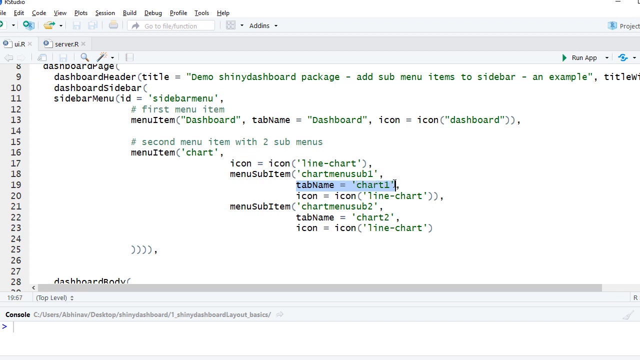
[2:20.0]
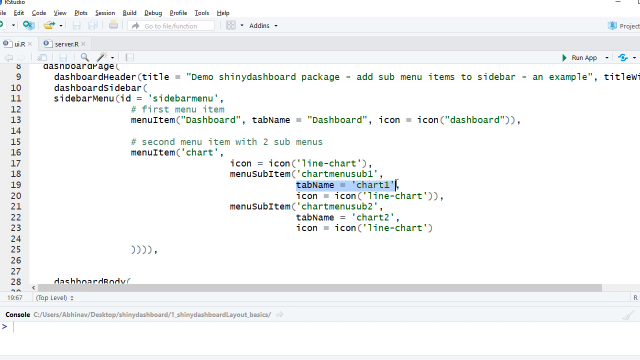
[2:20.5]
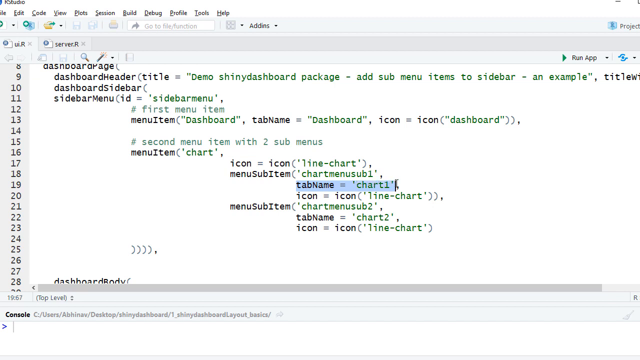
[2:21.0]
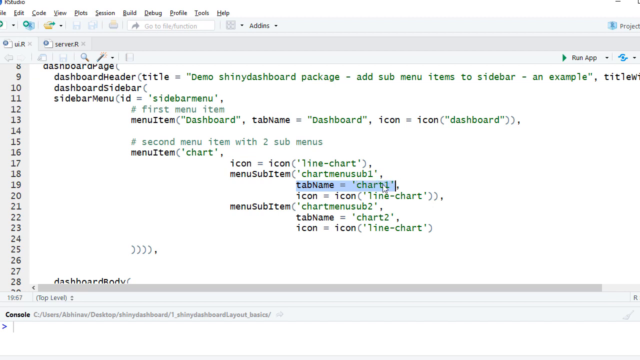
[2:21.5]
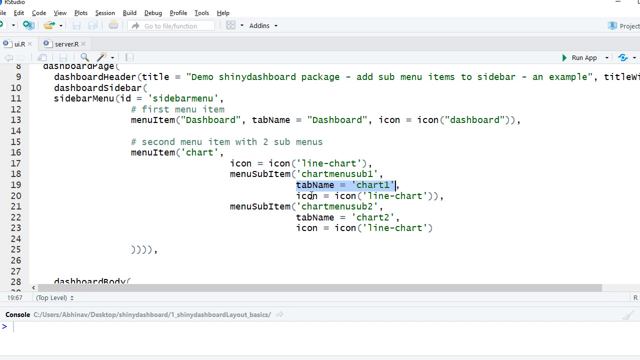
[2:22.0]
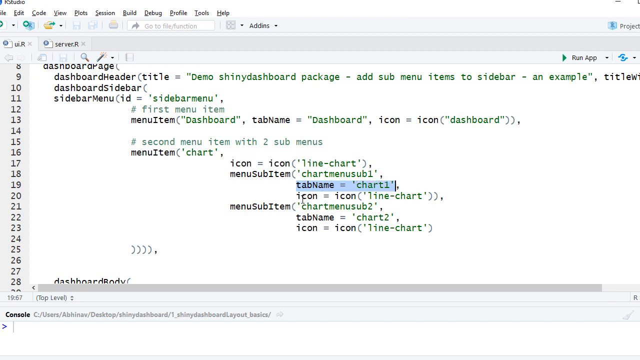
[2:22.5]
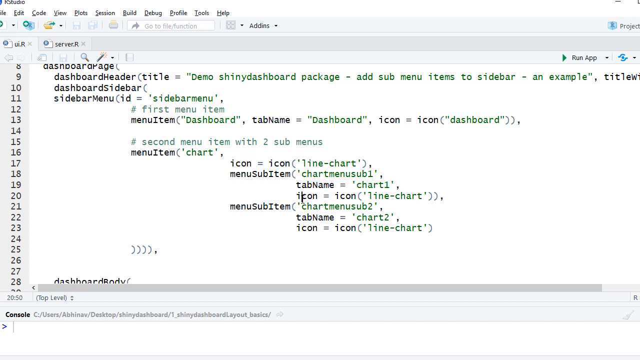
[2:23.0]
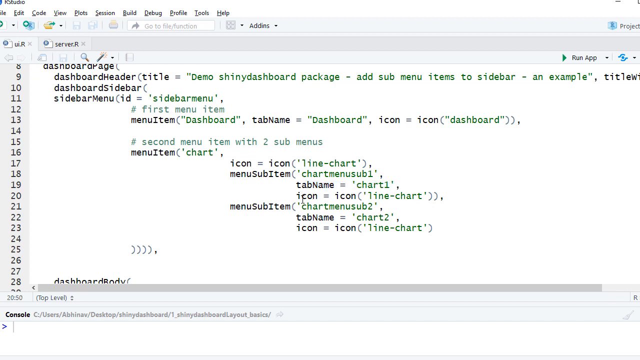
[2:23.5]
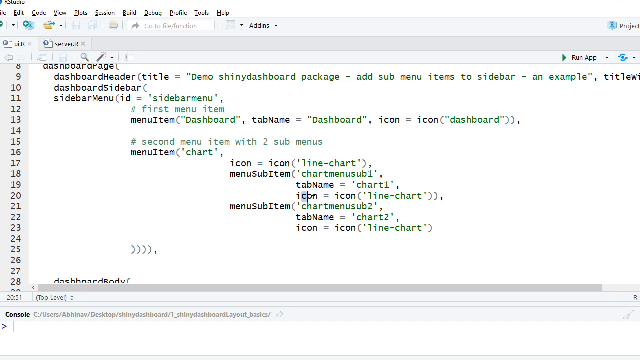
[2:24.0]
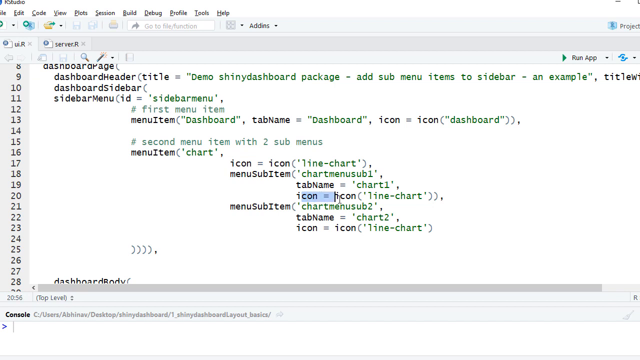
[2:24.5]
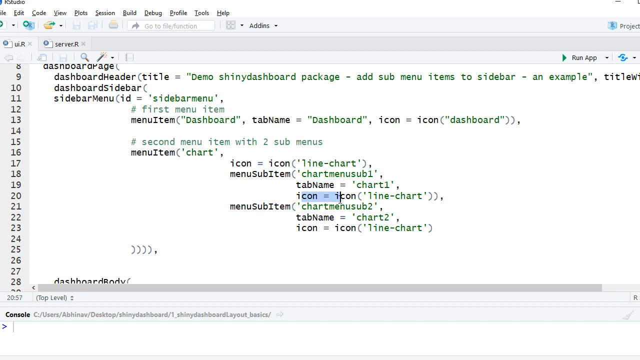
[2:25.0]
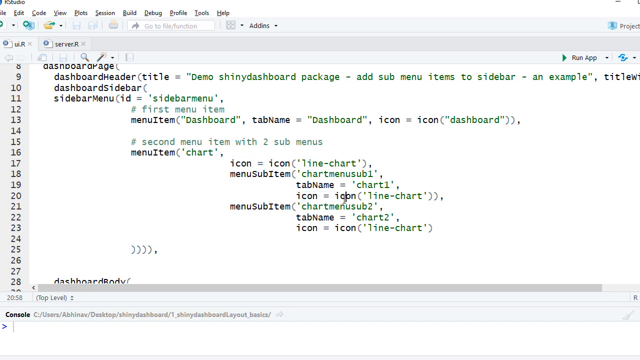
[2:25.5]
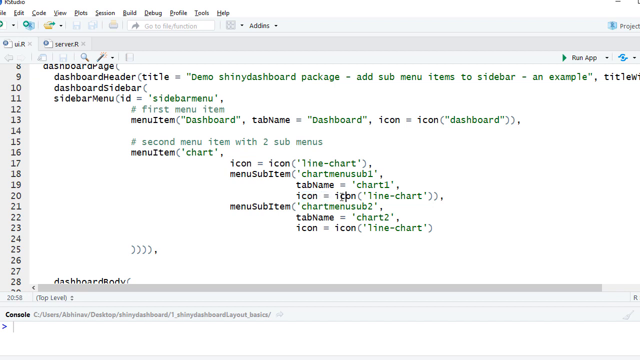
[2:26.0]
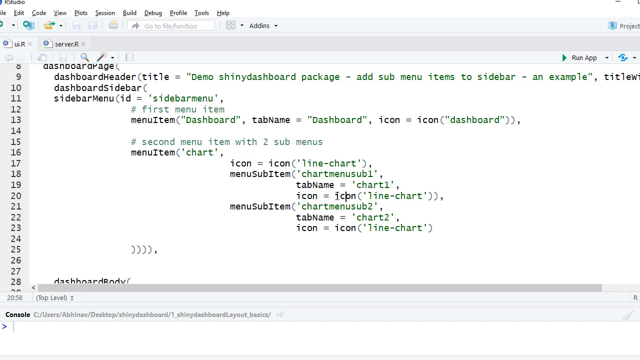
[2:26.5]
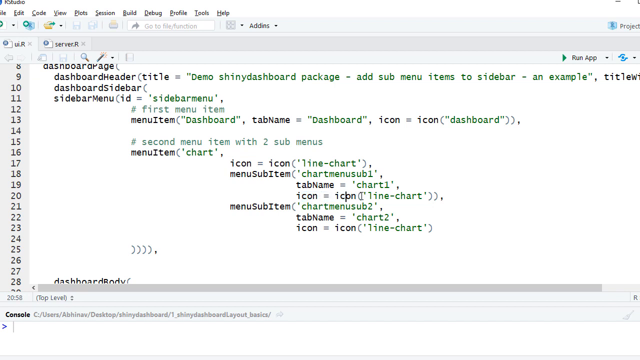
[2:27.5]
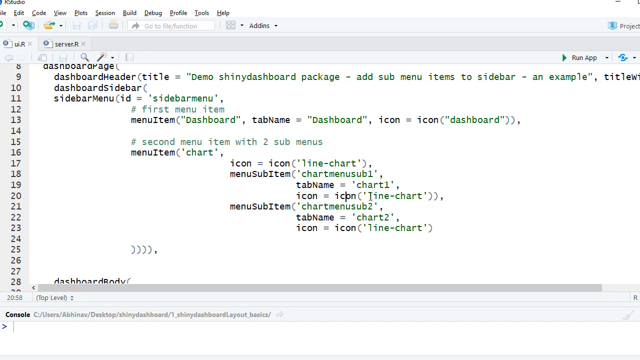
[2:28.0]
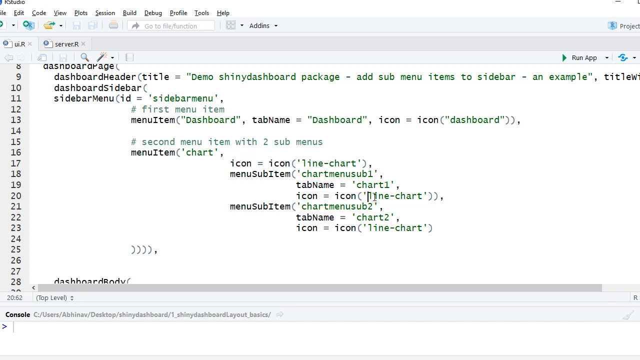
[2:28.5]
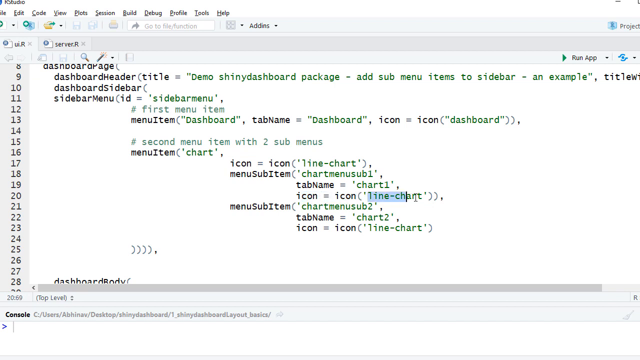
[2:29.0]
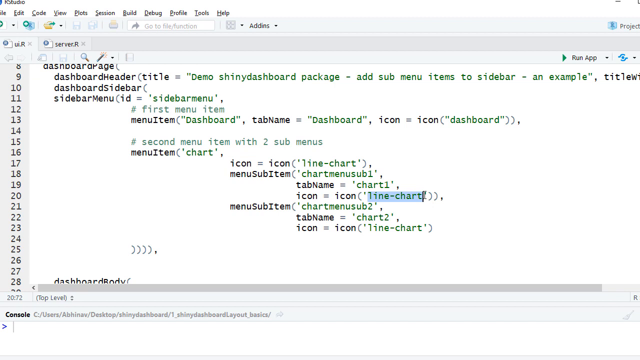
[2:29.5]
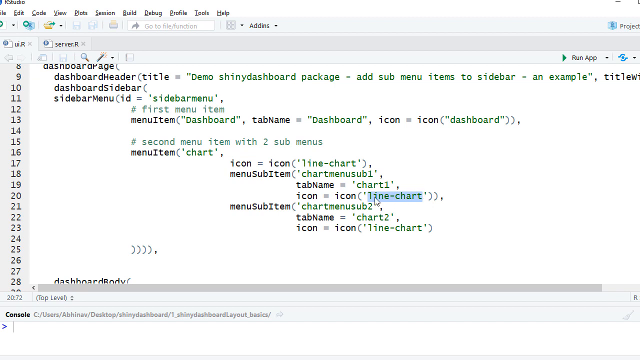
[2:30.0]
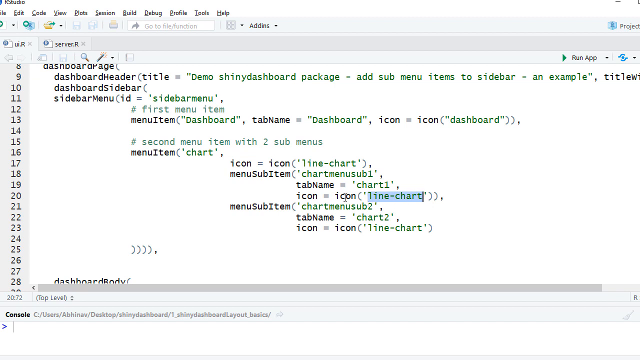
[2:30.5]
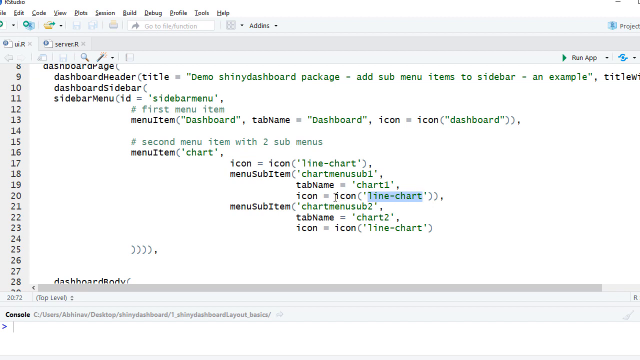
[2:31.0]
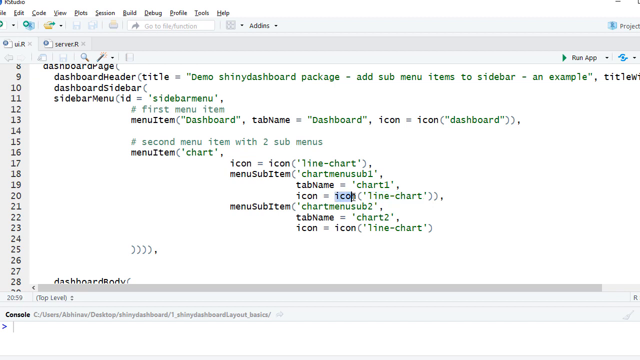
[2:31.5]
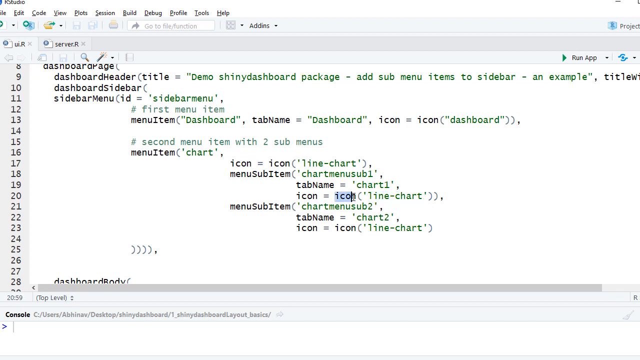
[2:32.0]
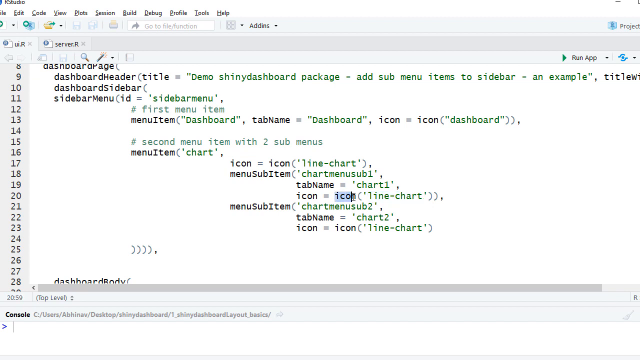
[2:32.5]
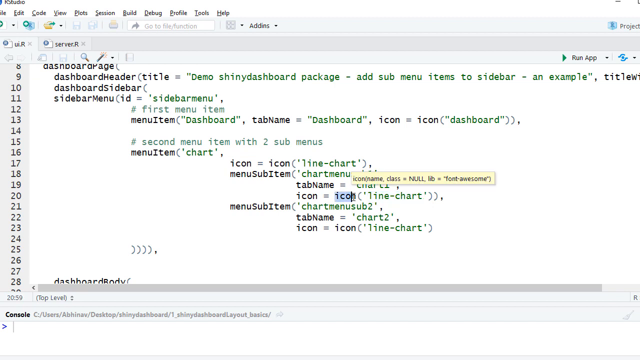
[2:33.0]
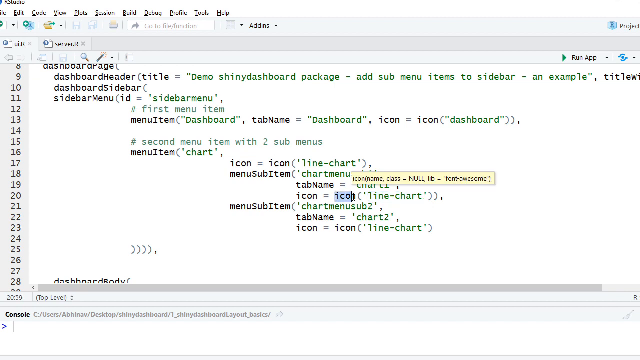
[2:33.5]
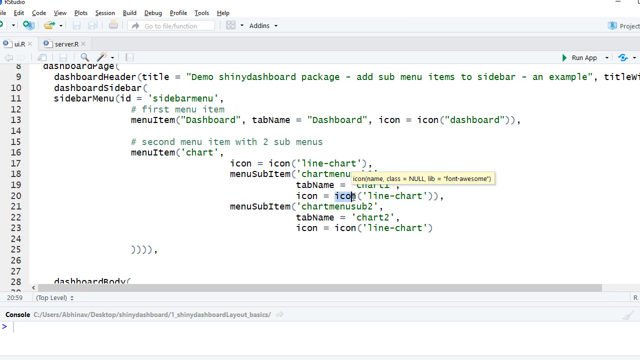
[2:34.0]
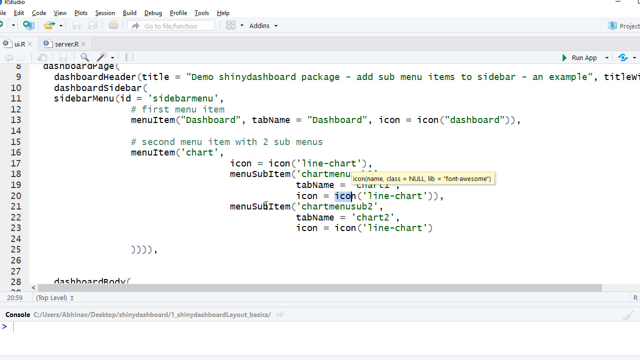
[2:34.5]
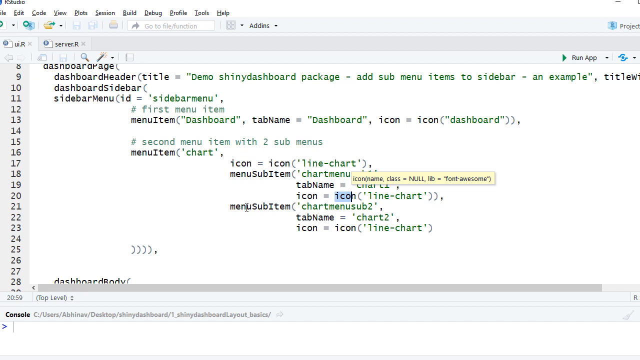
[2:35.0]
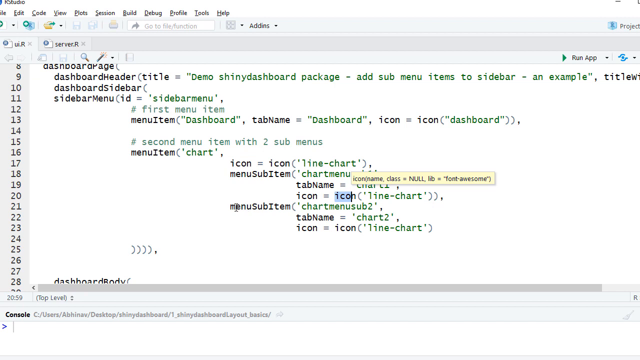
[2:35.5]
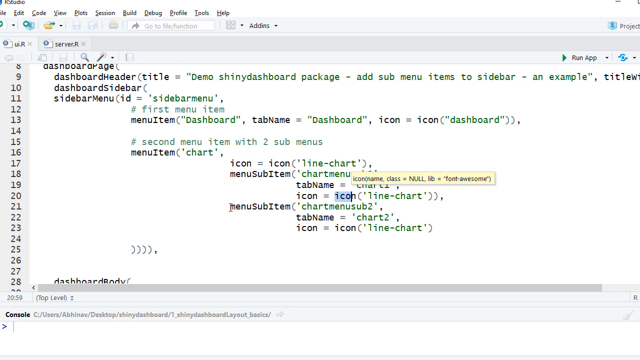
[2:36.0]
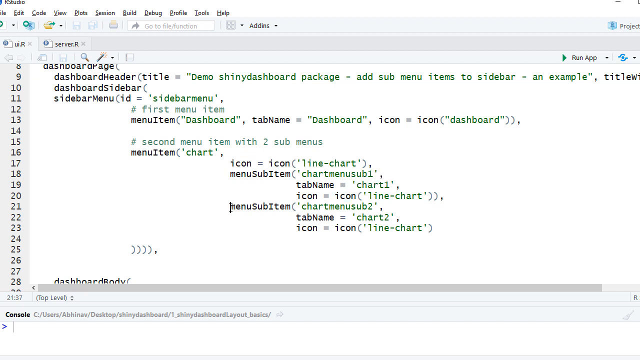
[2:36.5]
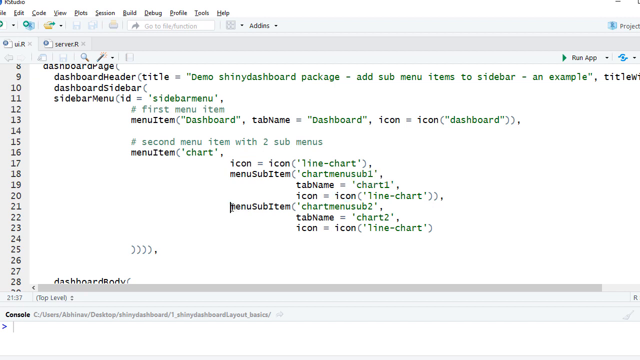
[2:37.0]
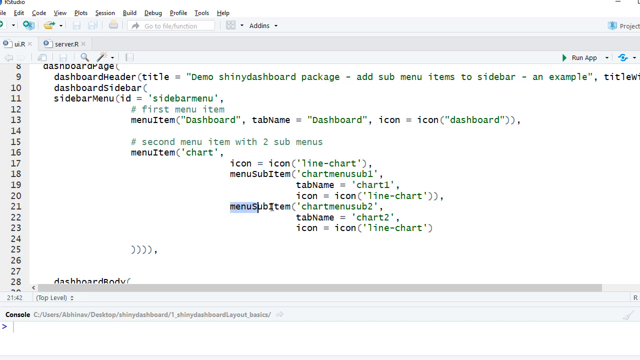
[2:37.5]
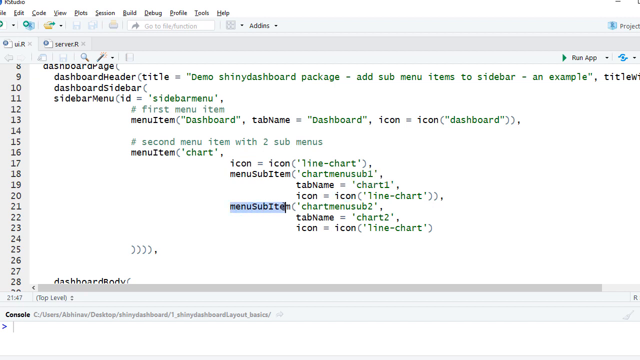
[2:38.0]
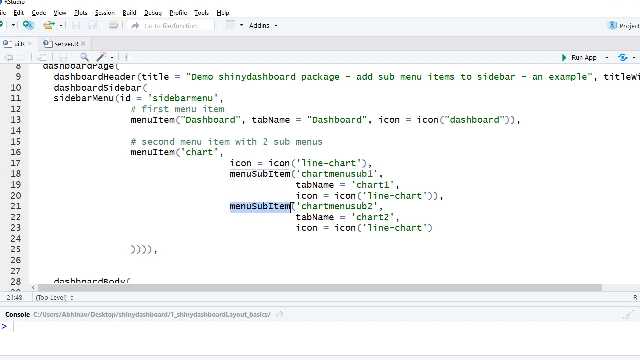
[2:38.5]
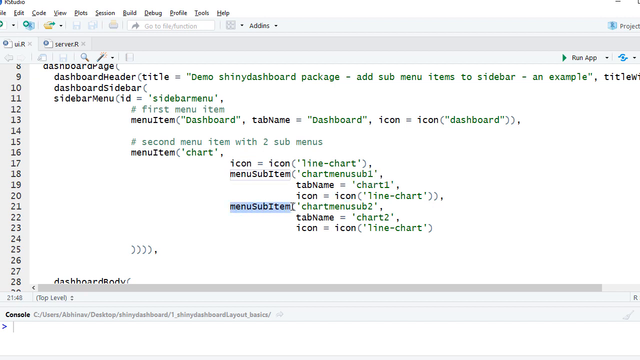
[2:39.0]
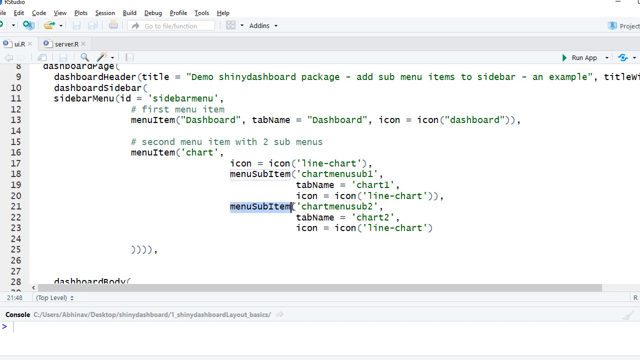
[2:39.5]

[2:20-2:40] The white backdrop with lines 8 to 28 remains, with a tab bar showing file, edit and so on at the very top. The rest of the page has black lettering on the left-hand side and green lettering on the right-hand side; recognizable words include dashboard, demo, menu item, chart, menu sub item and icon. The user highlights "con" in blue, then "line chart," then "icon," and then "menu sub item," all in blue, apparently just showing the options.